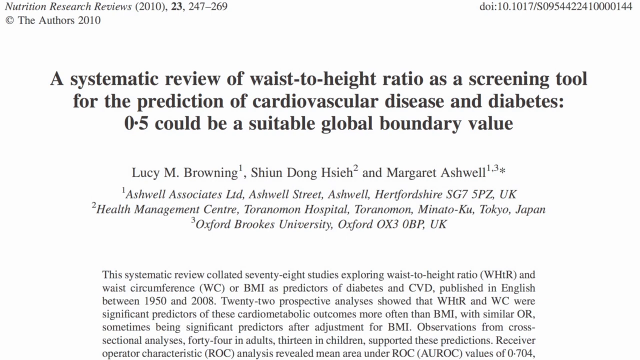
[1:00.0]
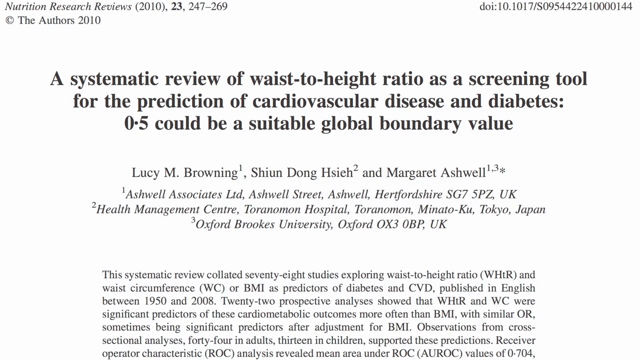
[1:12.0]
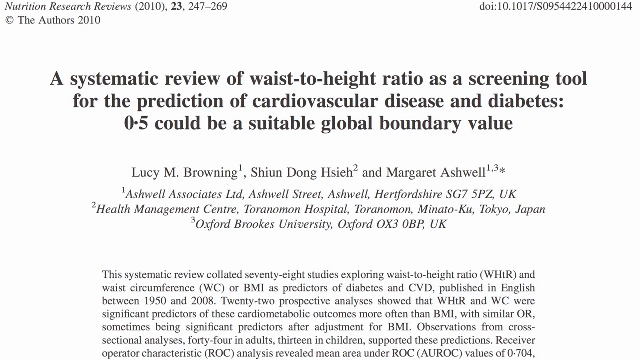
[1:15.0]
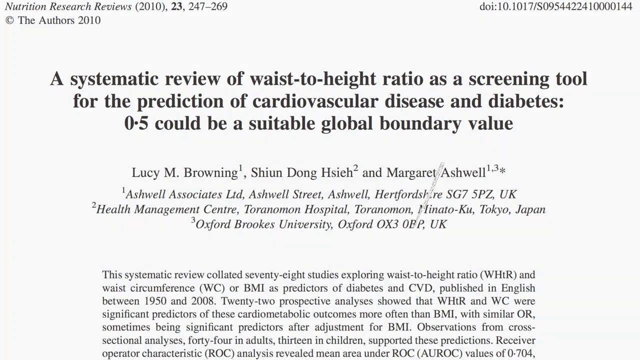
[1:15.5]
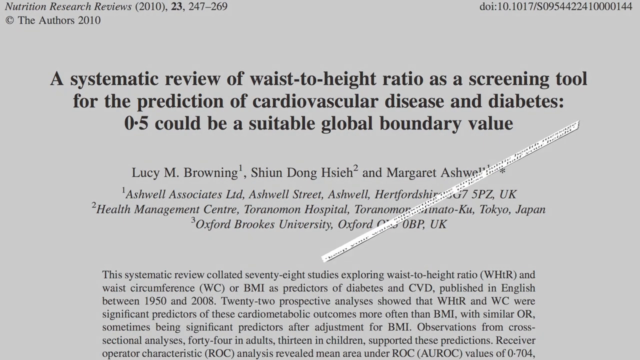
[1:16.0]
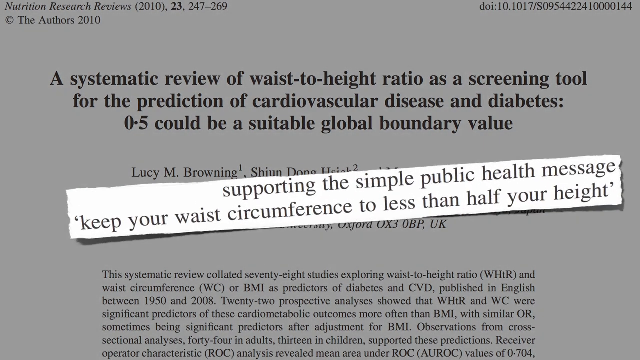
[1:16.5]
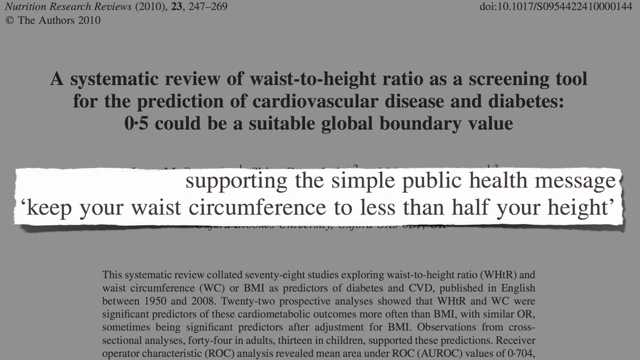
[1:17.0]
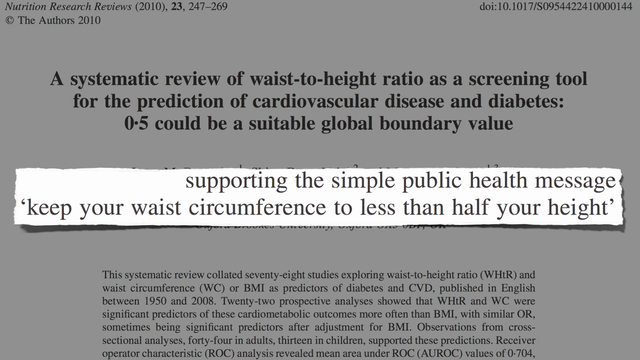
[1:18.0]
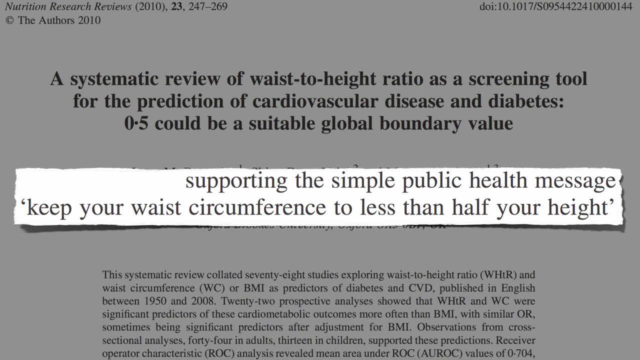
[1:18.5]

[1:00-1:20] The shot stays on a single medical journal page the entire time. Its title reads "a systematic review of waist to height ratio as a screening tool for the prediction of cardiovascular disease and diabetes. Zero to five could be a suitable global boundary value." Underneath are the authors of the article, listed from left to right. Eventually, text is superimposed on the middle of the screen, reading "supporting the simple public health message, keep your waist circumference to less than half your height."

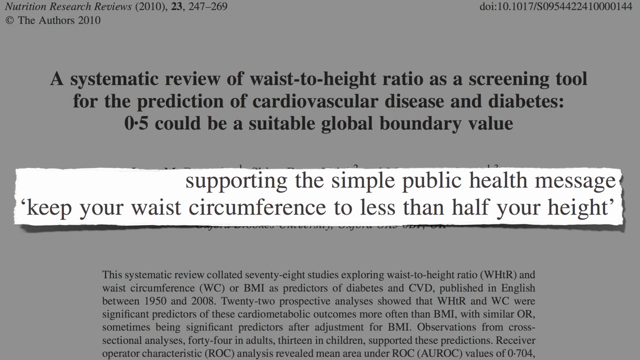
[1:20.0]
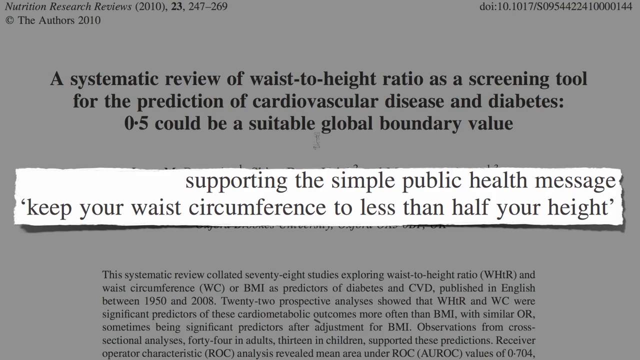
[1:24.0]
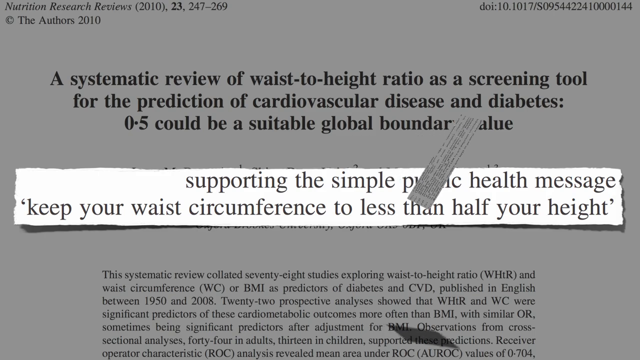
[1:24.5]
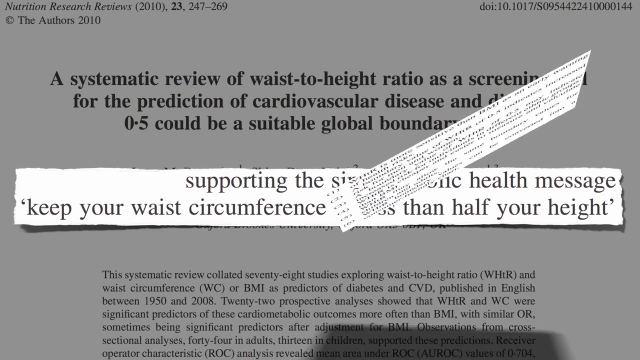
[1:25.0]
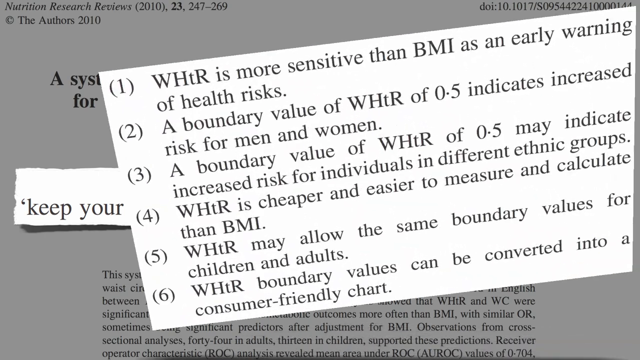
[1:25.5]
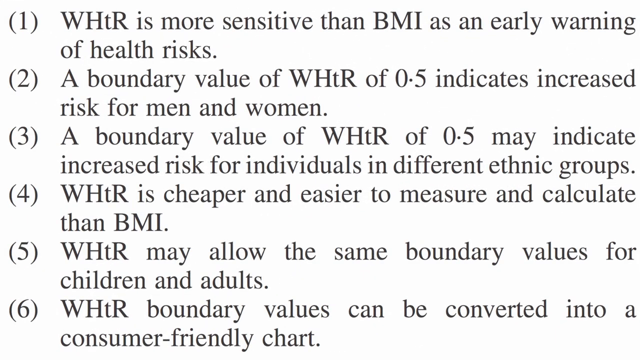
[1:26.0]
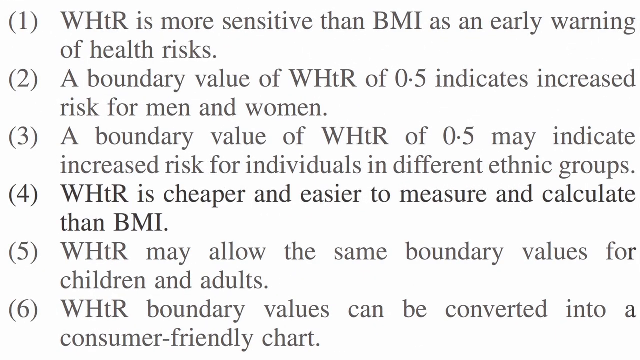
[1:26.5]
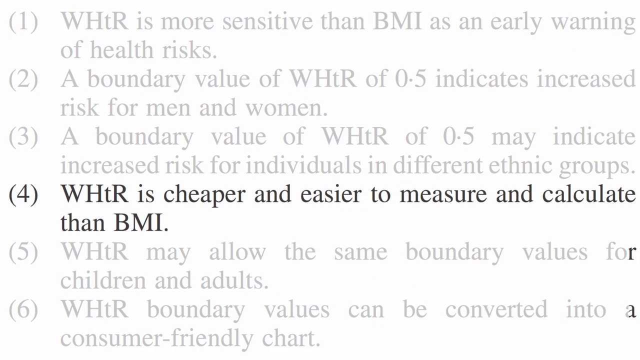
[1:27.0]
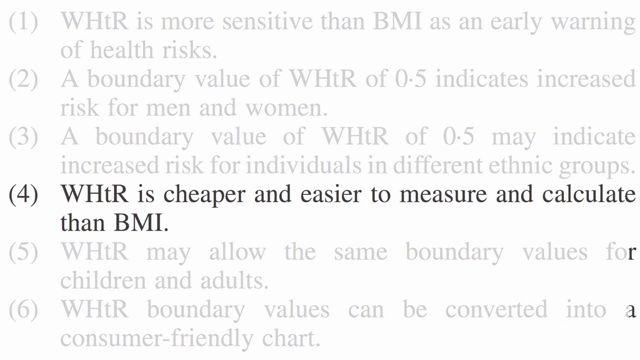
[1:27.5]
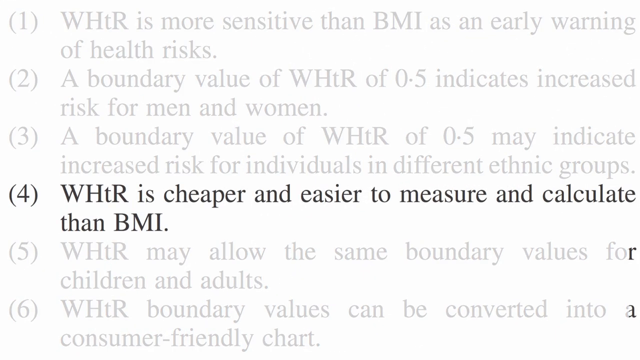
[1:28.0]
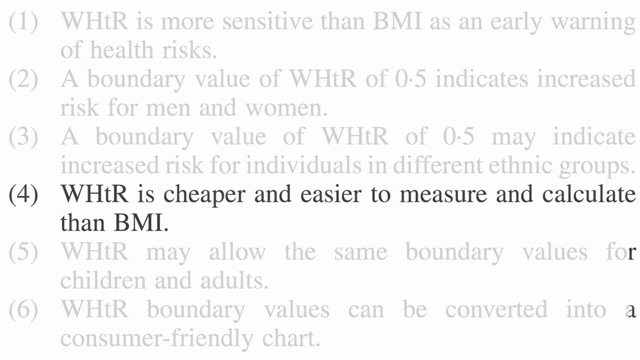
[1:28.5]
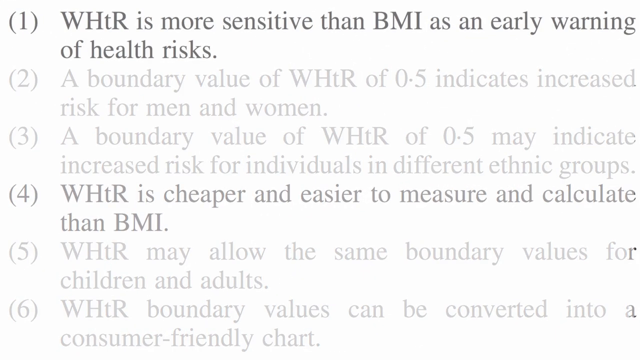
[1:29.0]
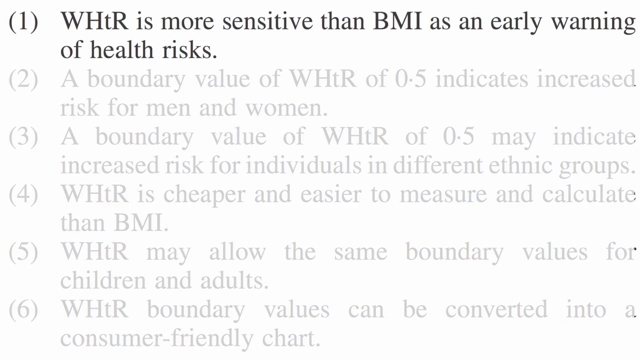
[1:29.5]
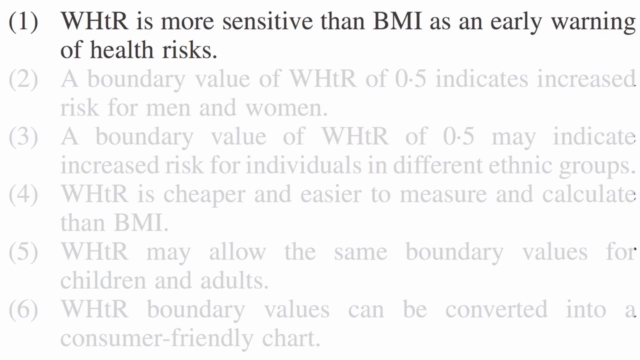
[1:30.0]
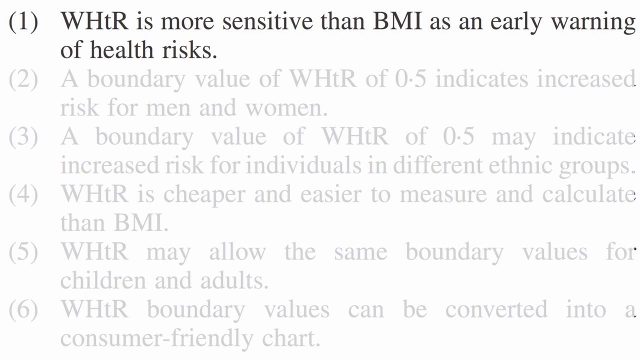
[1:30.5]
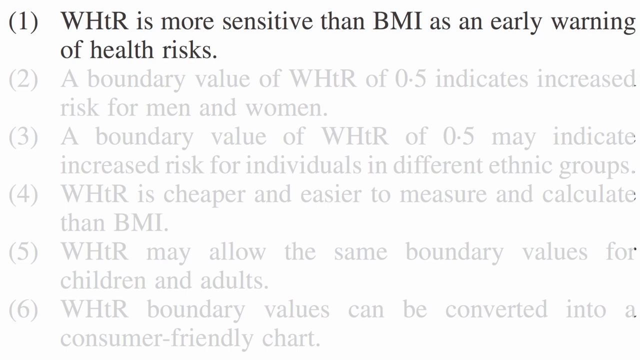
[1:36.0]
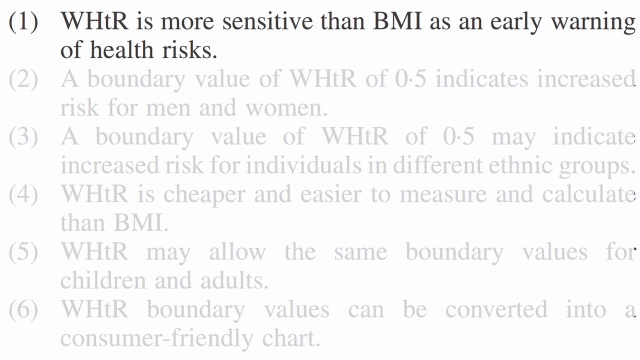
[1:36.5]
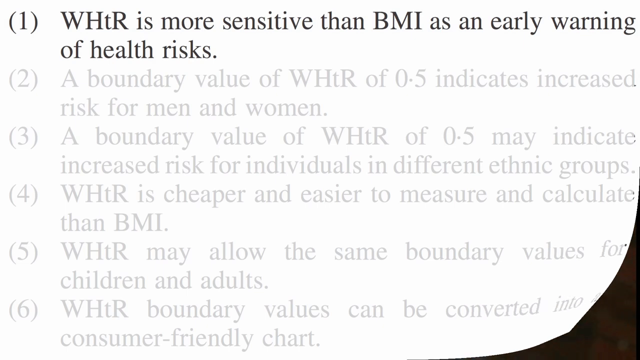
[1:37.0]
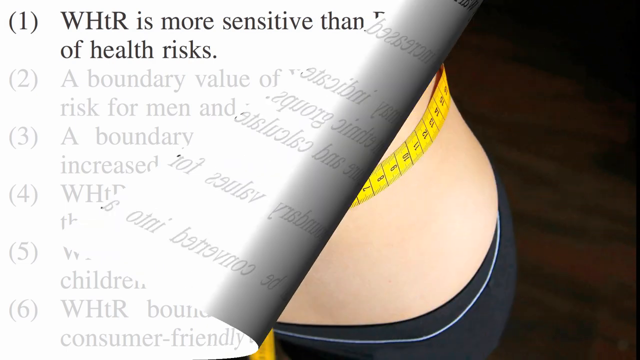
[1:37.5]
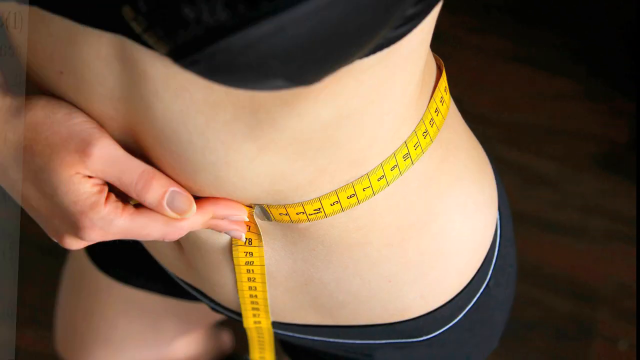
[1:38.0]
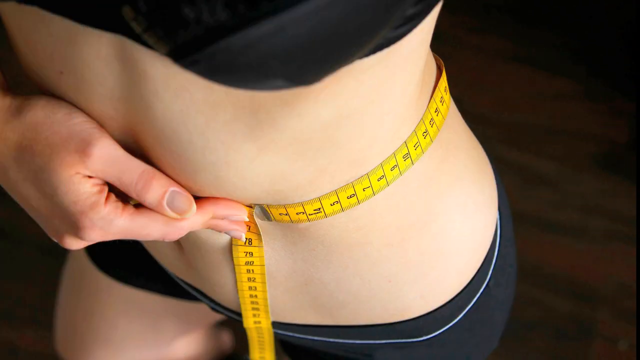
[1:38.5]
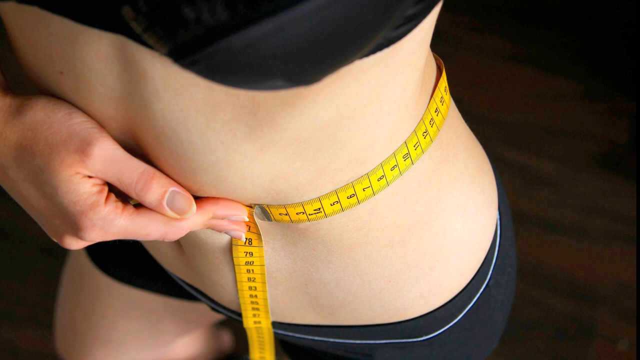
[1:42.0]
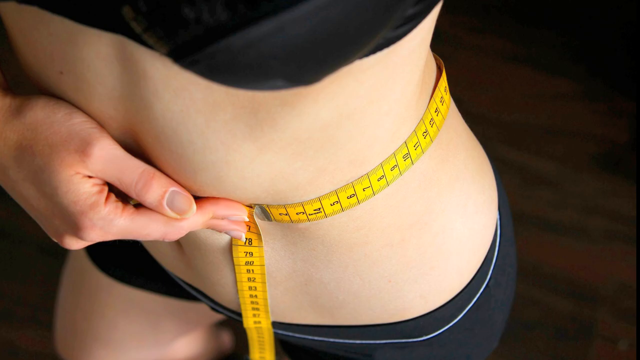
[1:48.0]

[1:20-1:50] The page of a medical journal is shown, titled "a systematic review of waist-to-height ratio as a screening tool for the prediction of cardiovascular disease and diabetes, zero to five, could be a suitable global boundary value." Underneath, superimposed text from the article reads "supporting the simple public health message, keep your waist circumference to less than half your height." The article is apparently published in the Nutrition Research Reviews.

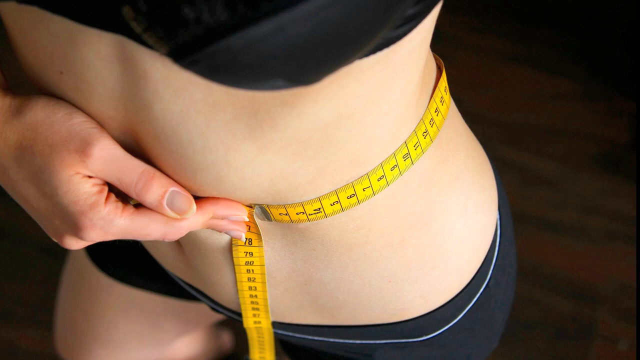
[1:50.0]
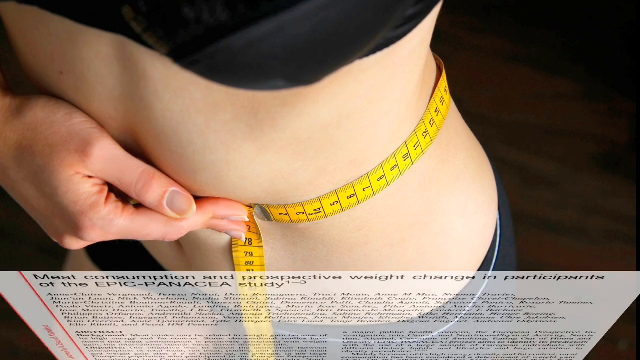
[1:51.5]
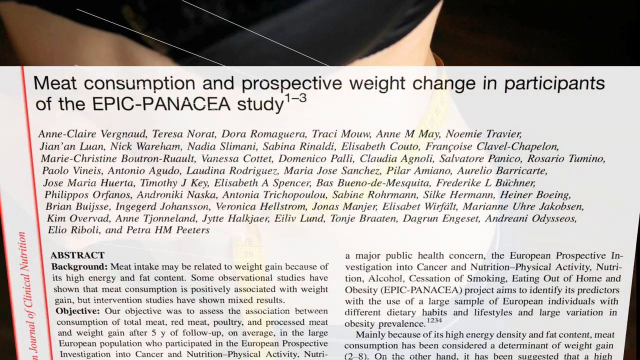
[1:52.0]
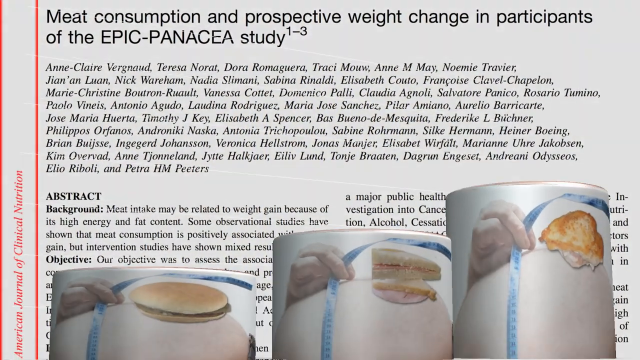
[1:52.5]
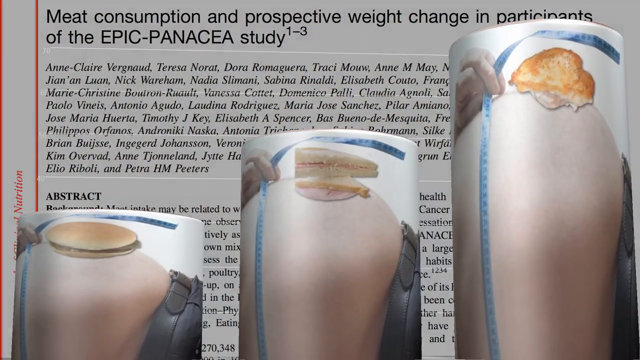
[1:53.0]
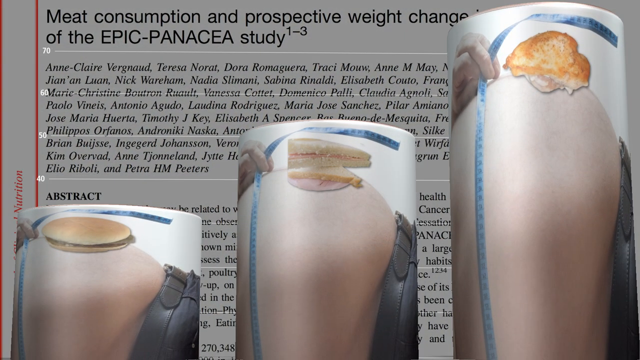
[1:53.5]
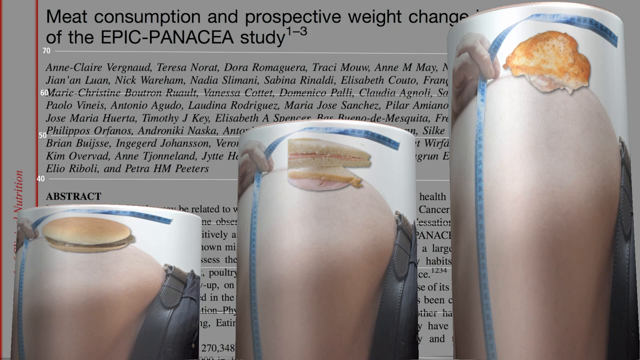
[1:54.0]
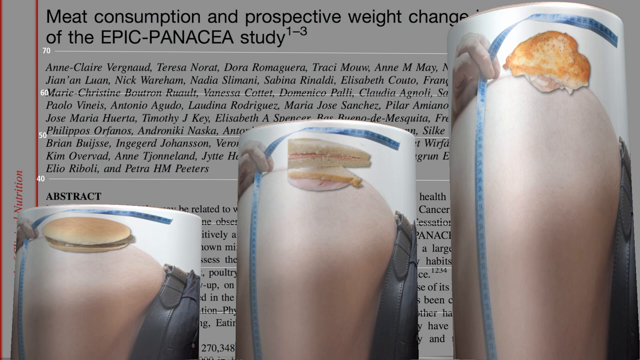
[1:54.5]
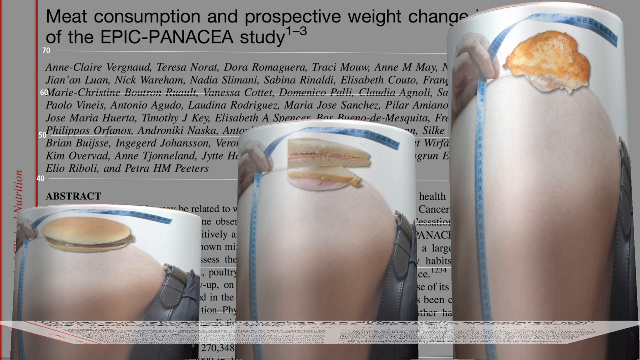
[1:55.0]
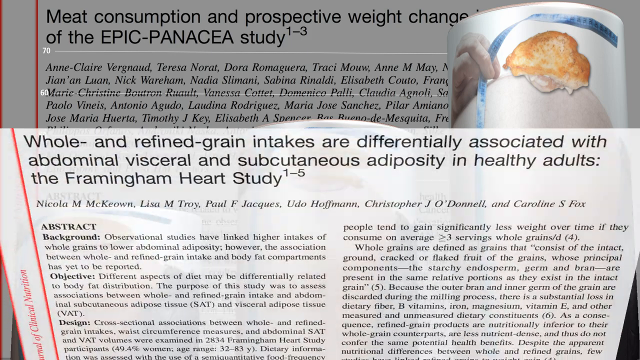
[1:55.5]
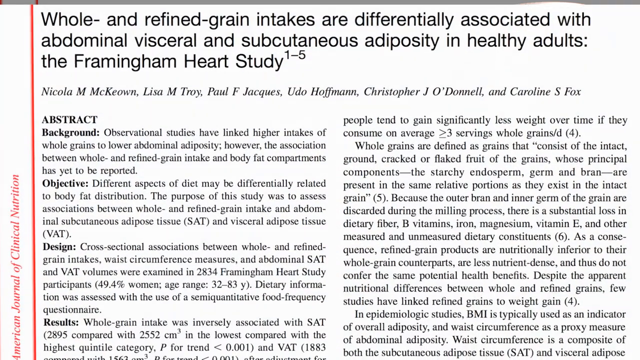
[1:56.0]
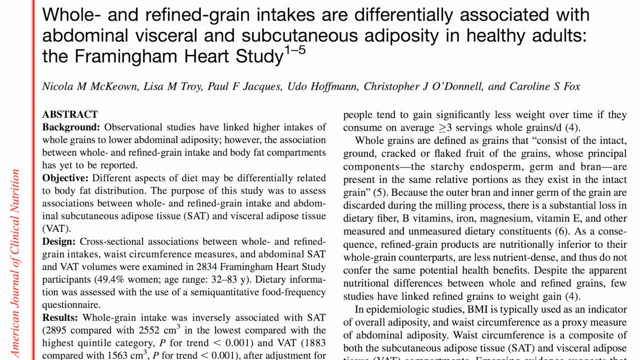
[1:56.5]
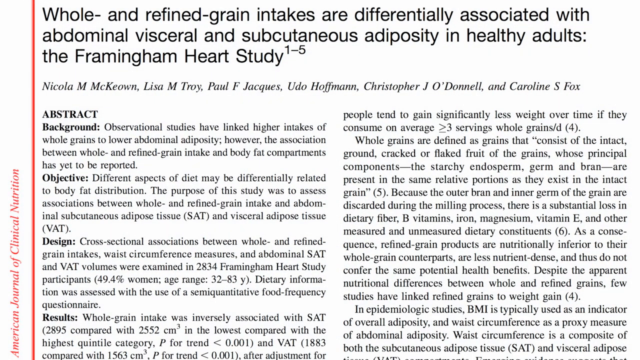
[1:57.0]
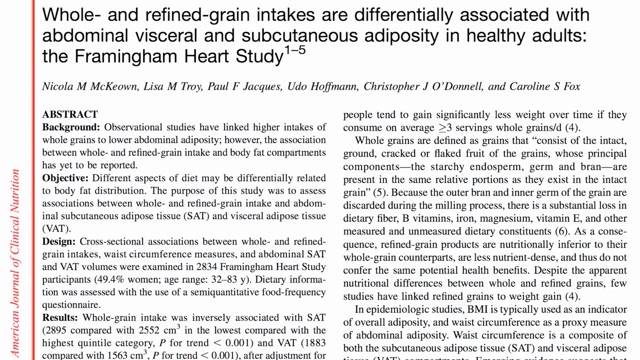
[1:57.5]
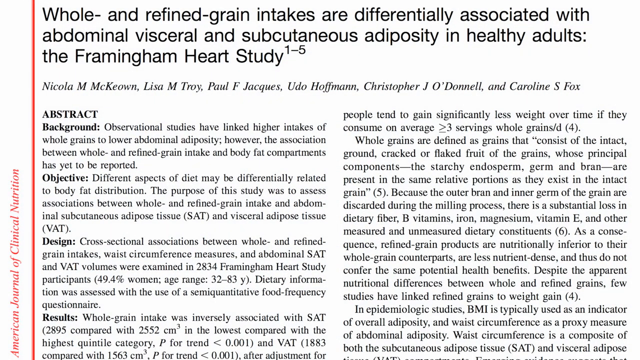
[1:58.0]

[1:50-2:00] An image shows a woman wrapping a tape measure around her stomach area, apparently measuring the circumference of her waist. The video then transitions to an image of an article titled "meat consumption and prospective weight change in participants of the EPIC-Panacea study," published in a journal.